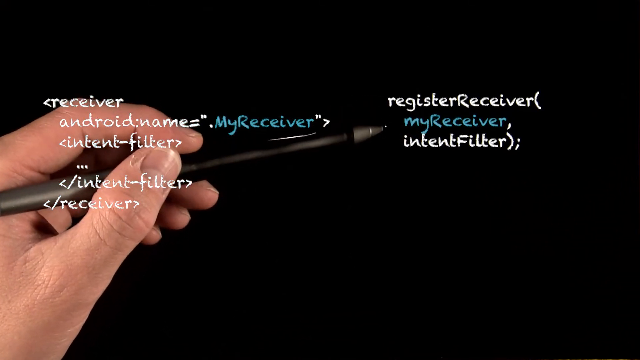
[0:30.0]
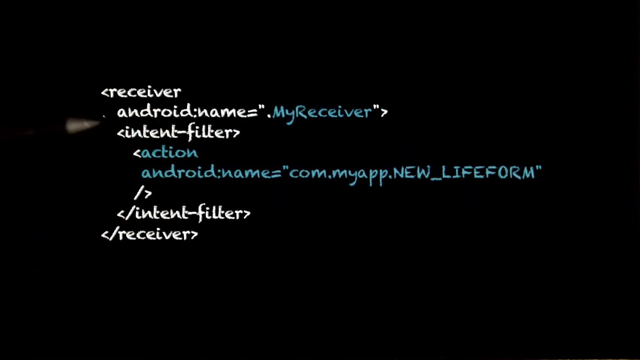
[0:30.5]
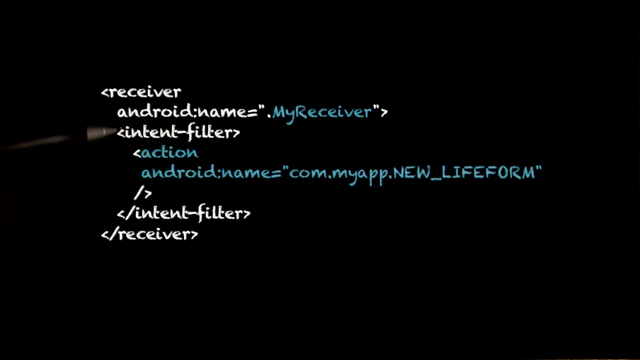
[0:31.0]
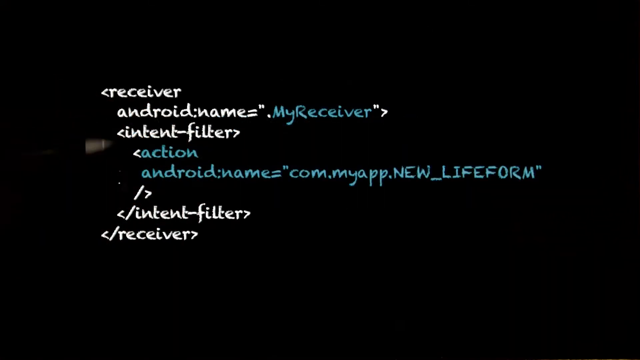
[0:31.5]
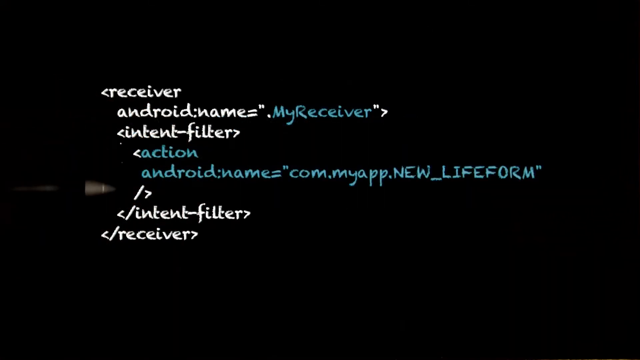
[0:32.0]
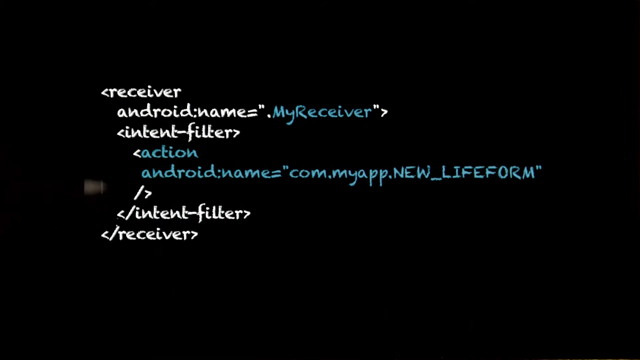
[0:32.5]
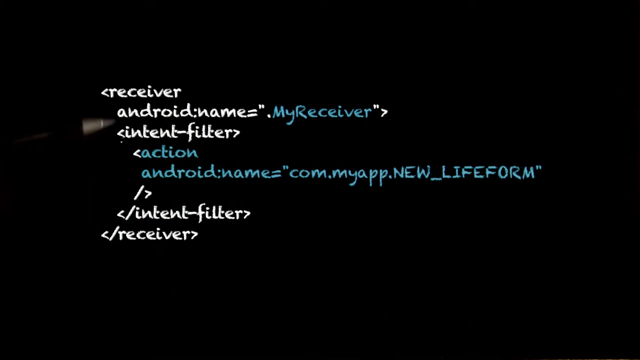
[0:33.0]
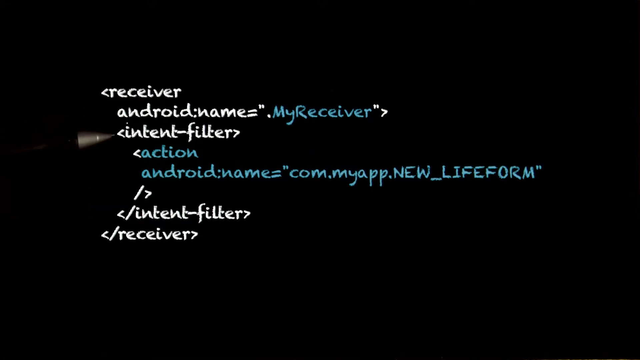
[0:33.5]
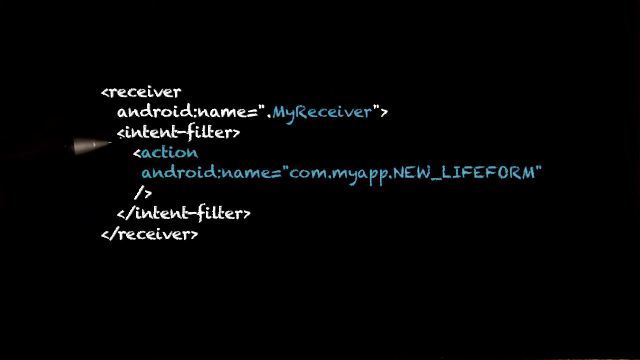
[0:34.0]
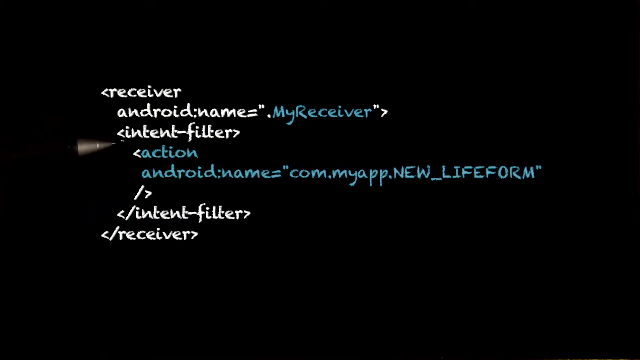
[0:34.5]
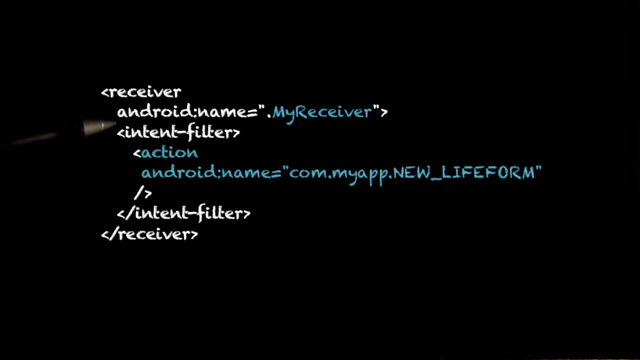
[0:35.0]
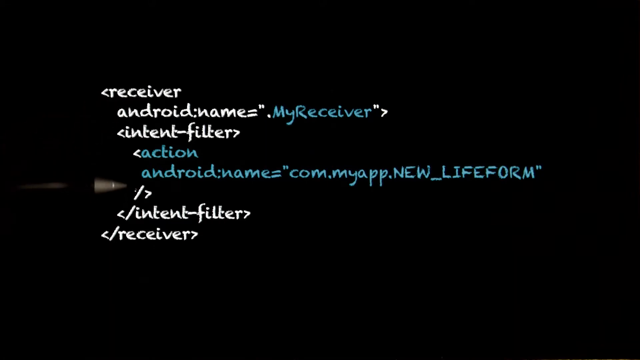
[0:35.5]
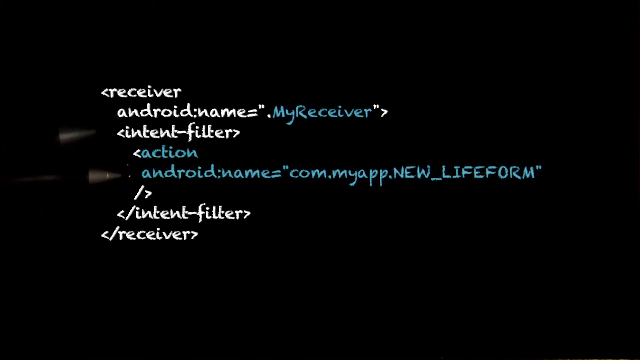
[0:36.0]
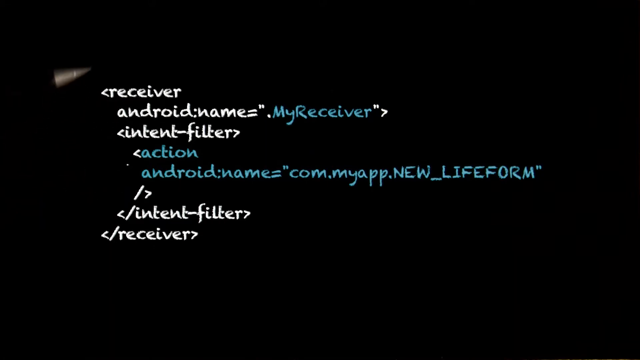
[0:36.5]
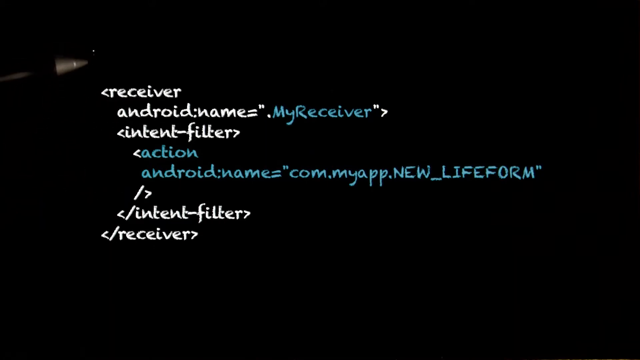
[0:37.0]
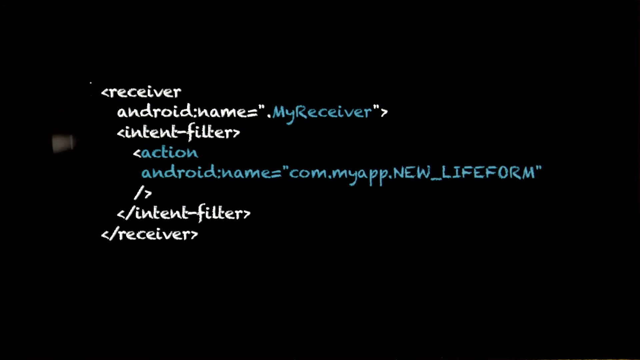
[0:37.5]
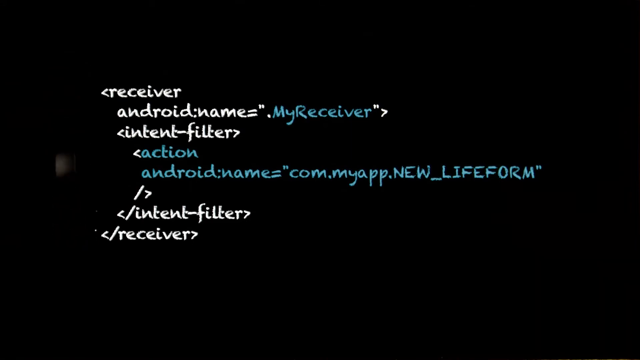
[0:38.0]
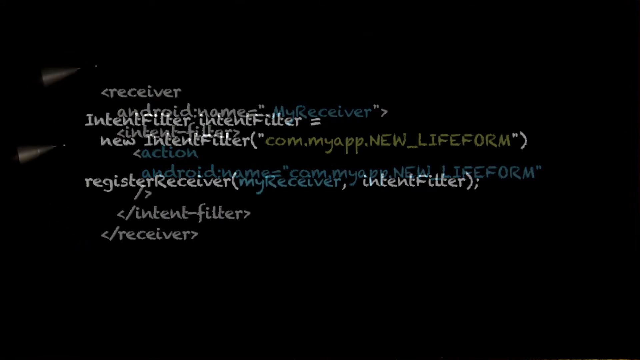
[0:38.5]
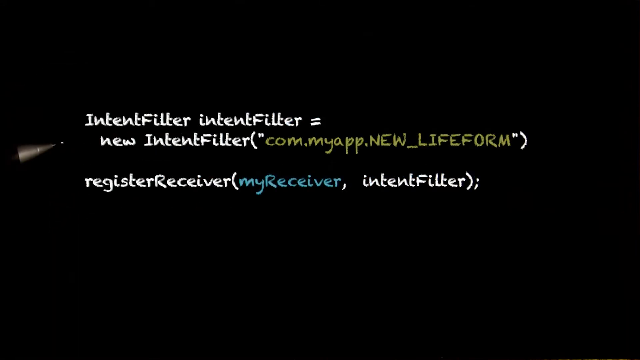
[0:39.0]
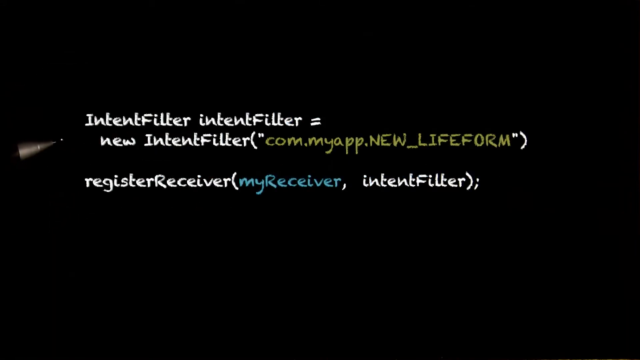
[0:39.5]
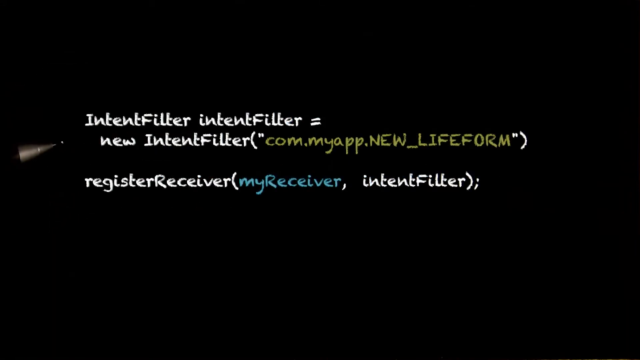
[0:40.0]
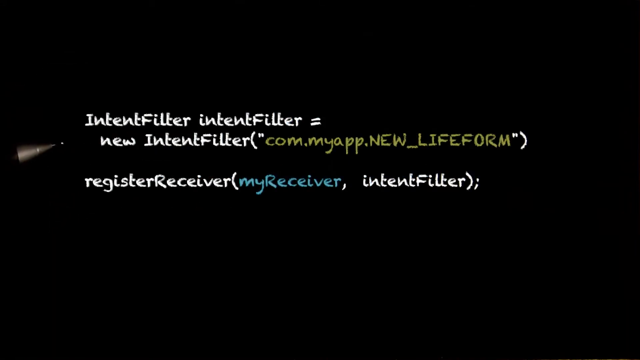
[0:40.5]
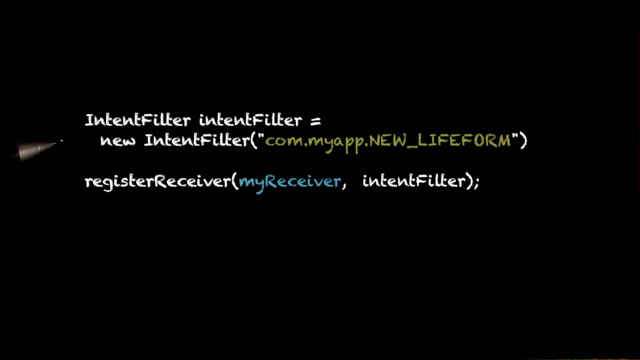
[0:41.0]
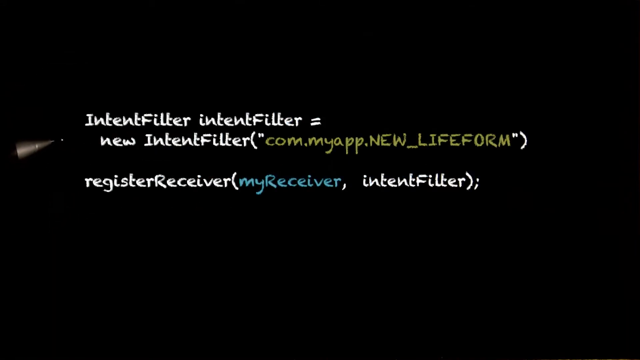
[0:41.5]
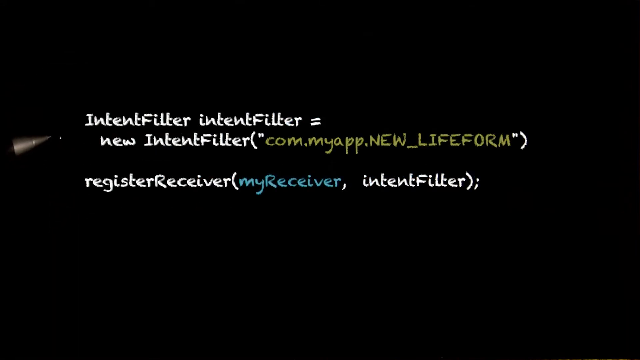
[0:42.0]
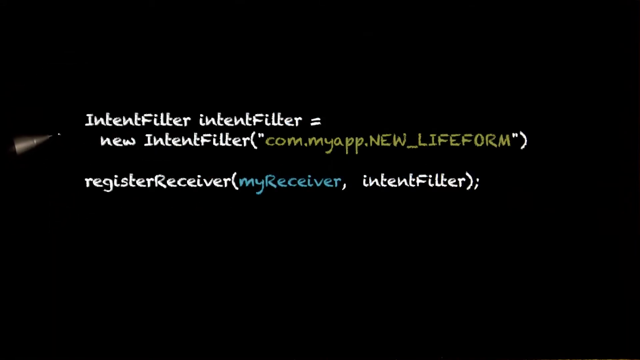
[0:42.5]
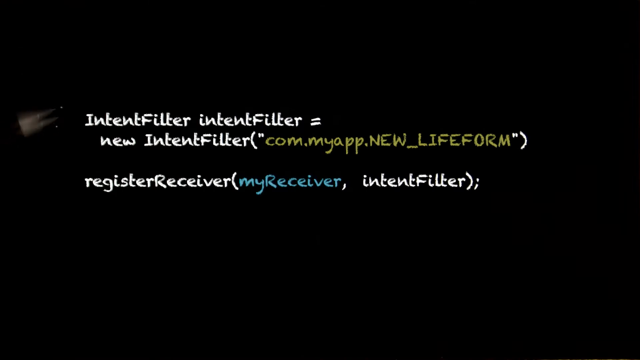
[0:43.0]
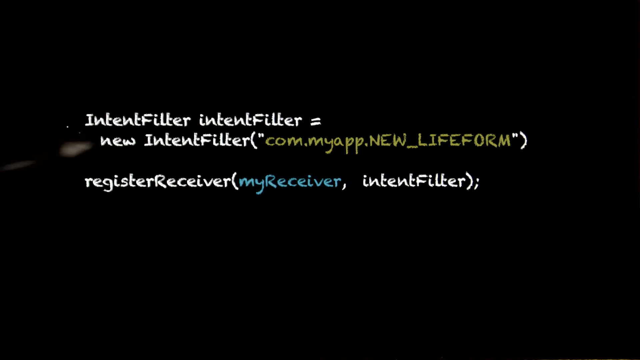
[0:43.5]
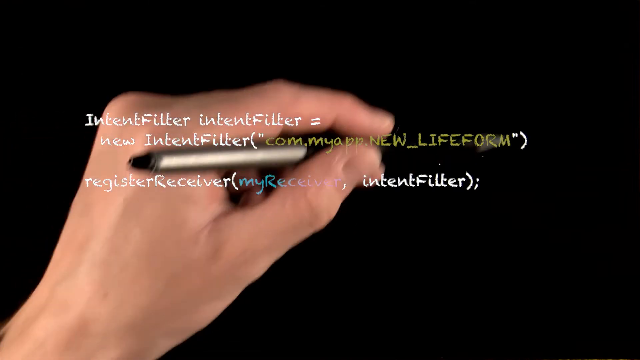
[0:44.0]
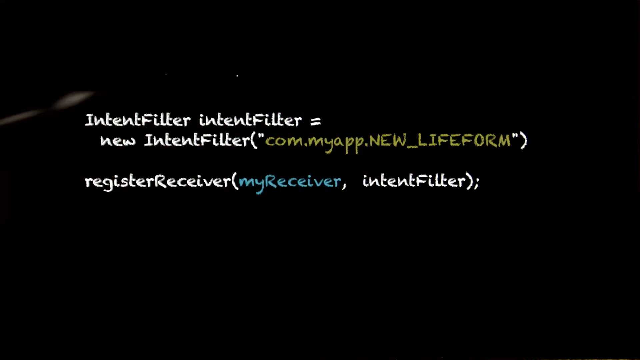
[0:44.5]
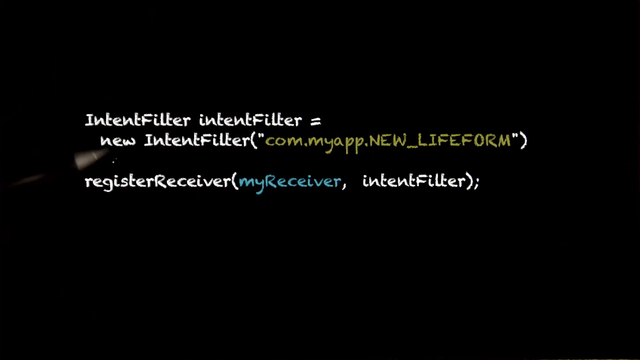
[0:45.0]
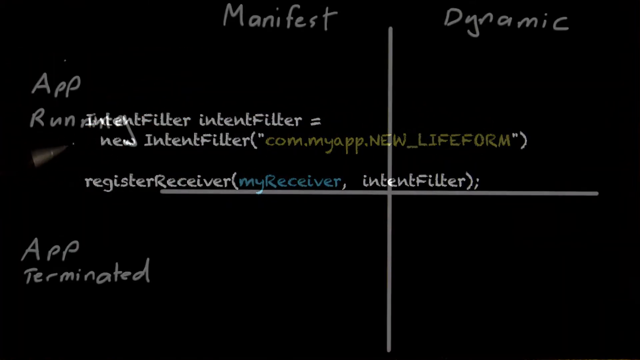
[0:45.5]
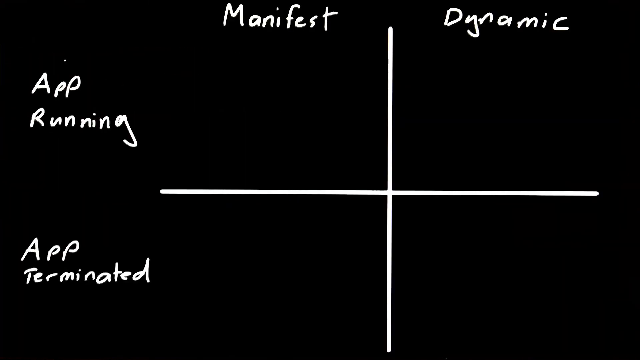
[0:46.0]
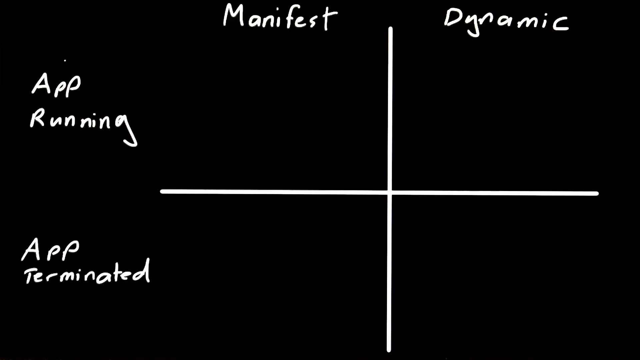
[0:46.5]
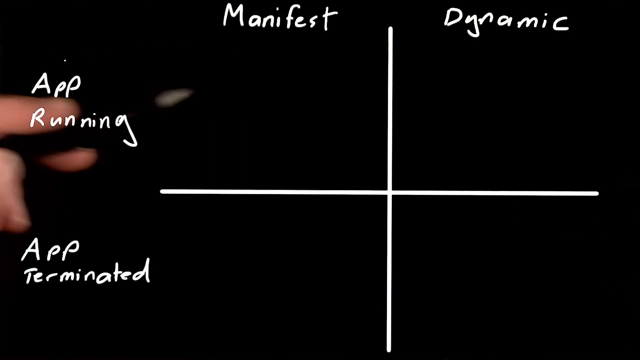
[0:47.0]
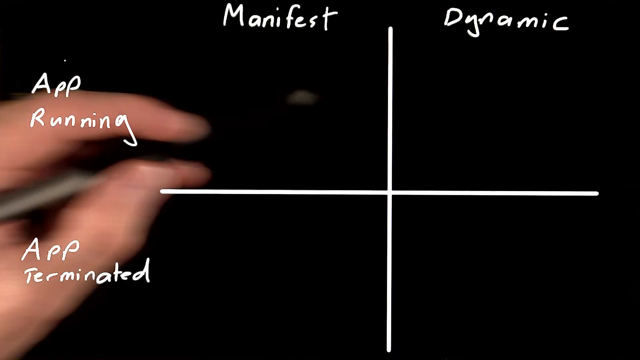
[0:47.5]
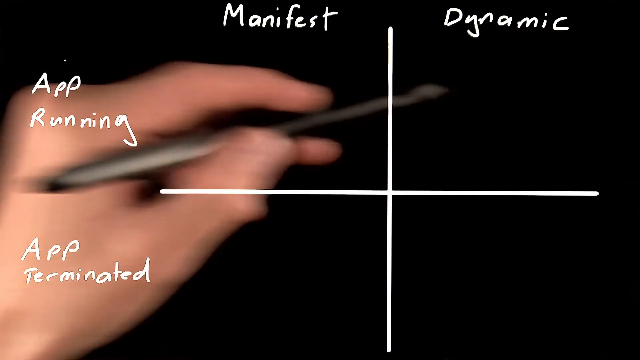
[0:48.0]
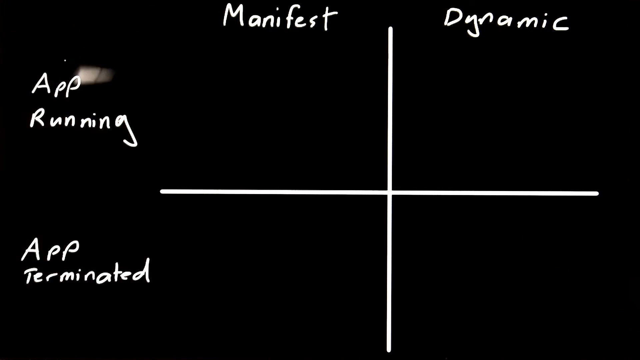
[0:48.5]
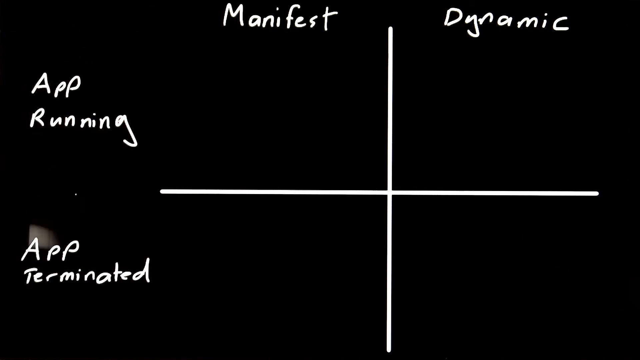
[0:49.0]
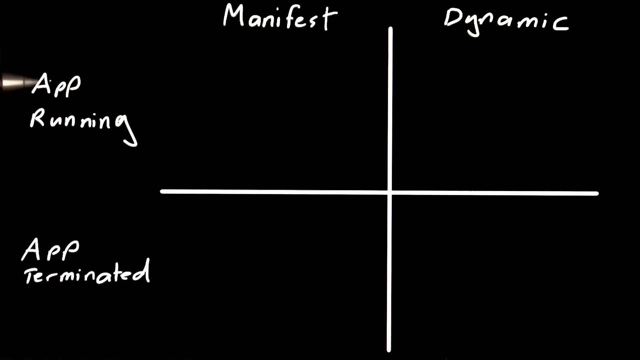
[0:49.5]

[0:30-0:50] Text that looks like some type of code is superimposed on the screen. In the background, a person holds a black pen, their thumb and fingers visible, and moves it around on a black screen at the back. The pen's tip moves up and then down over to the left side of the screen, and eventually the hand moves into the center of the screen and moves in a kind of circular motion. More text appears later. The code at the front includes "register receiver my receiver intent filter," along with entries mentioning Android name, intent filter, receiver, and an action. The video is apparently about programming an app, possibly, using the code on screen and the pen in the background to explain the coding process.